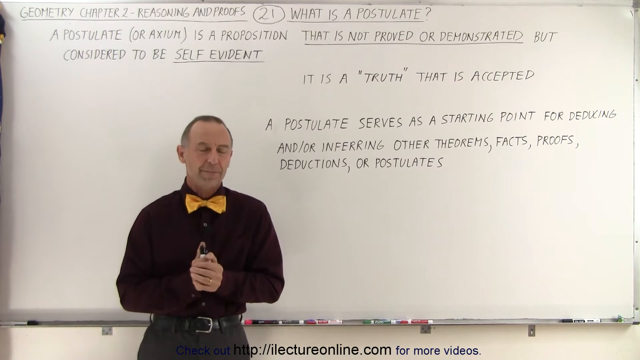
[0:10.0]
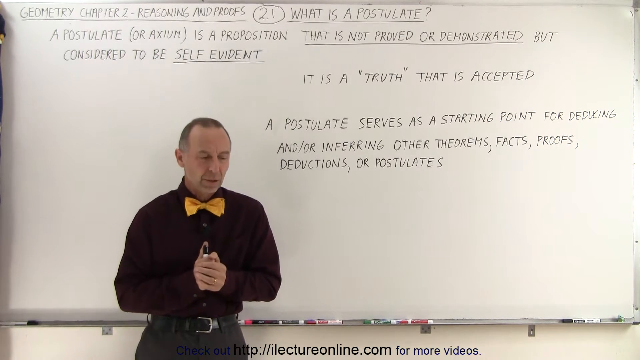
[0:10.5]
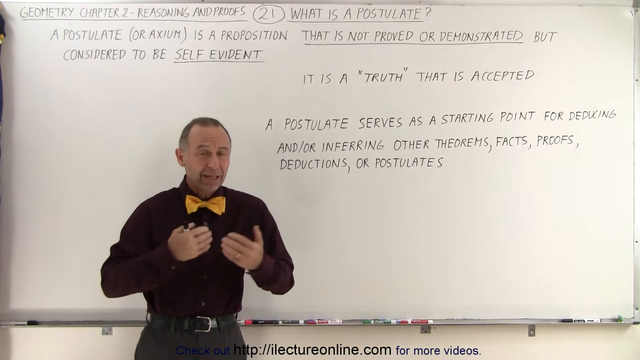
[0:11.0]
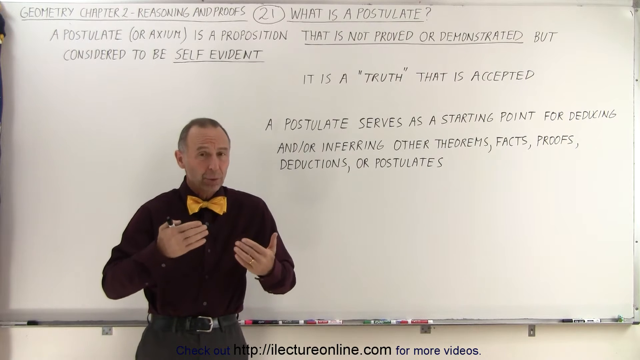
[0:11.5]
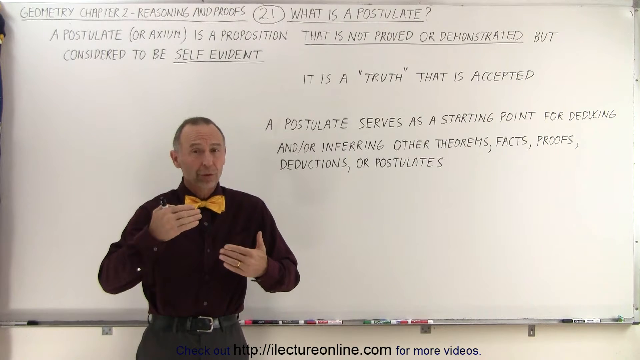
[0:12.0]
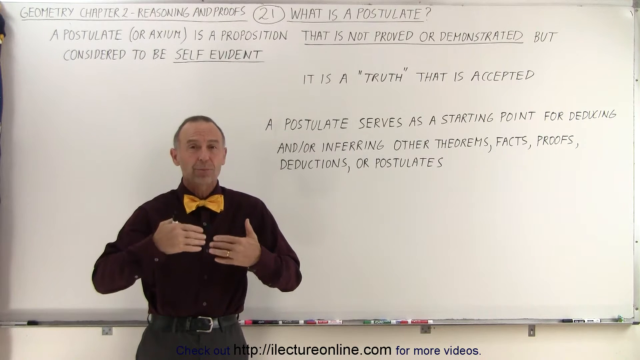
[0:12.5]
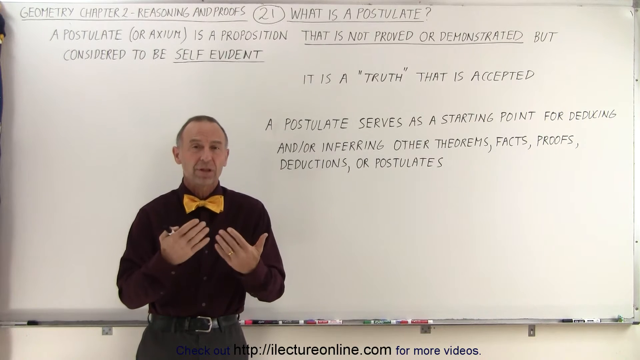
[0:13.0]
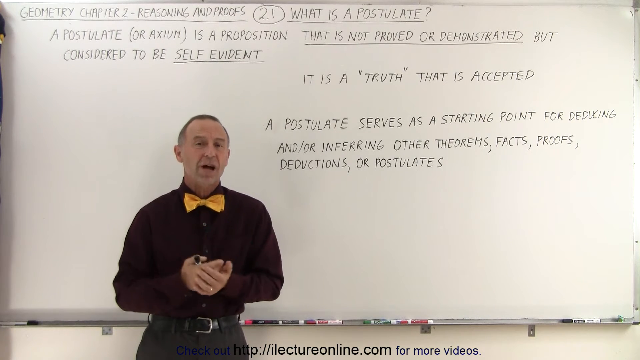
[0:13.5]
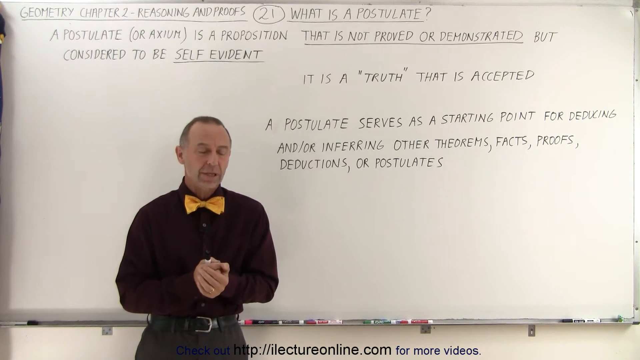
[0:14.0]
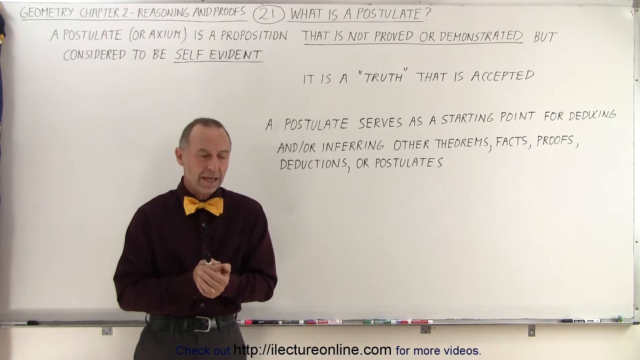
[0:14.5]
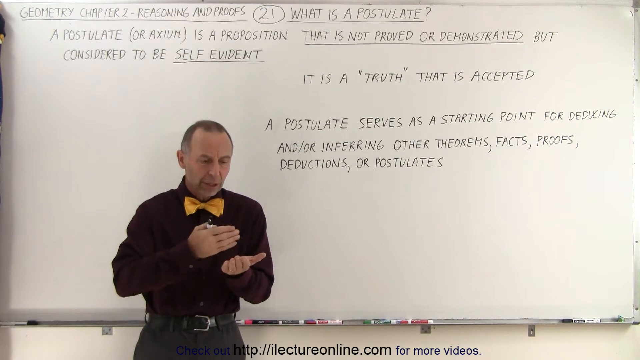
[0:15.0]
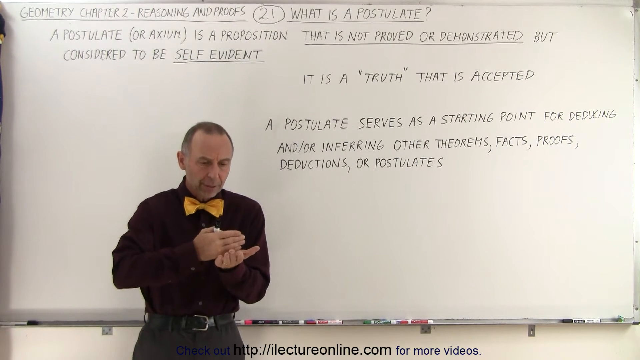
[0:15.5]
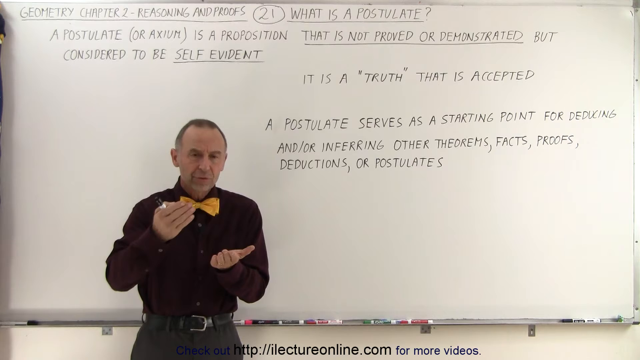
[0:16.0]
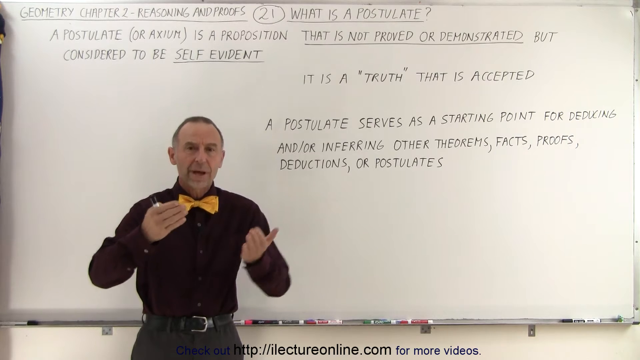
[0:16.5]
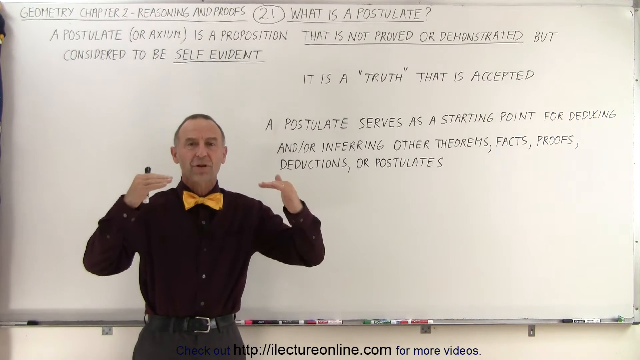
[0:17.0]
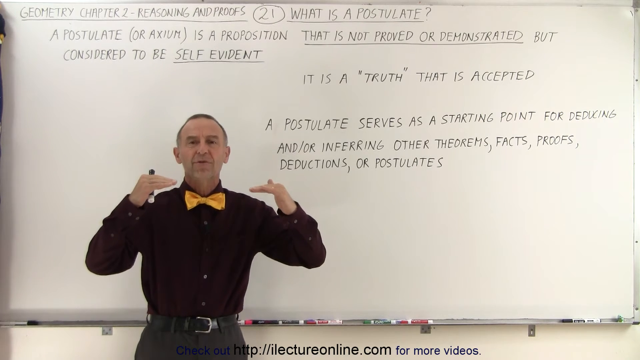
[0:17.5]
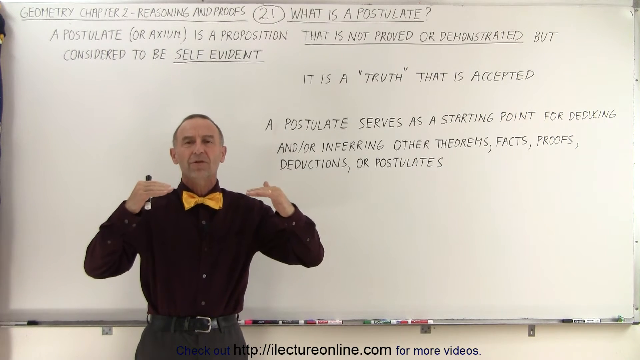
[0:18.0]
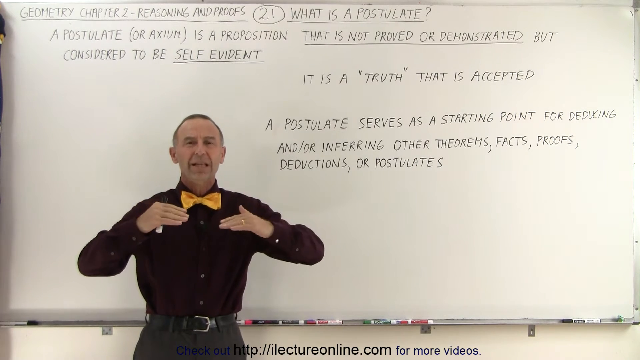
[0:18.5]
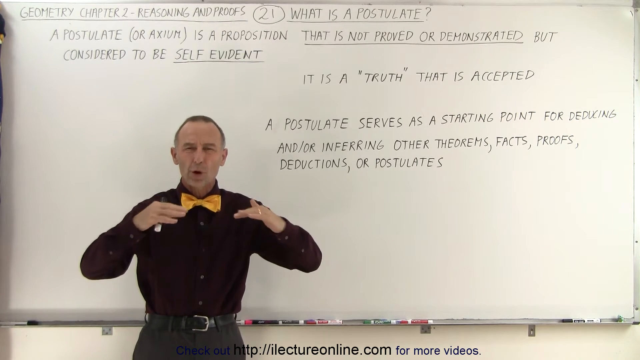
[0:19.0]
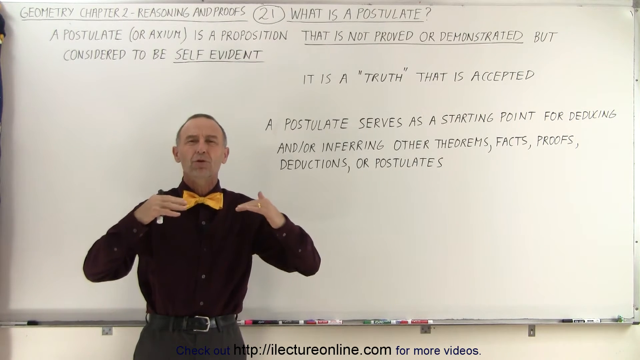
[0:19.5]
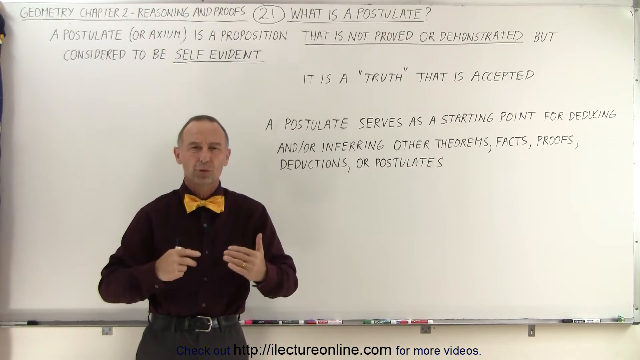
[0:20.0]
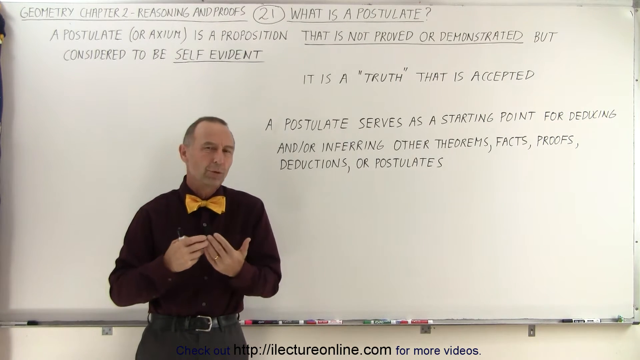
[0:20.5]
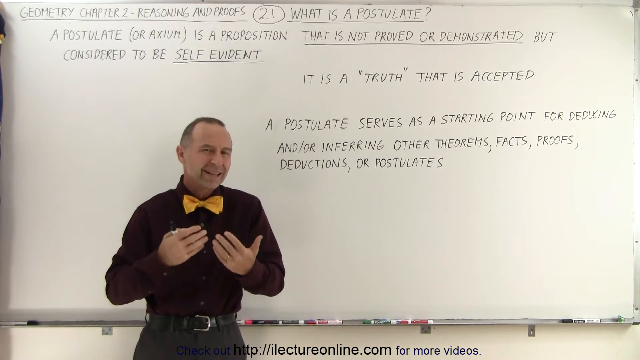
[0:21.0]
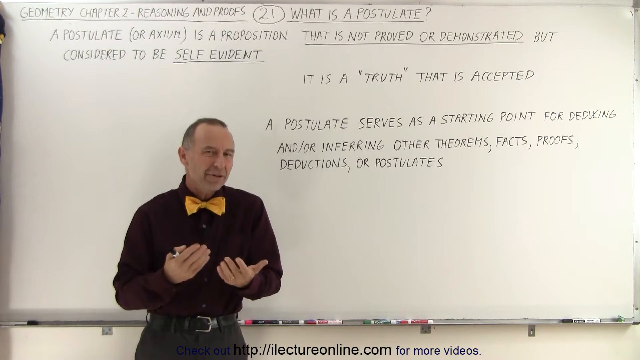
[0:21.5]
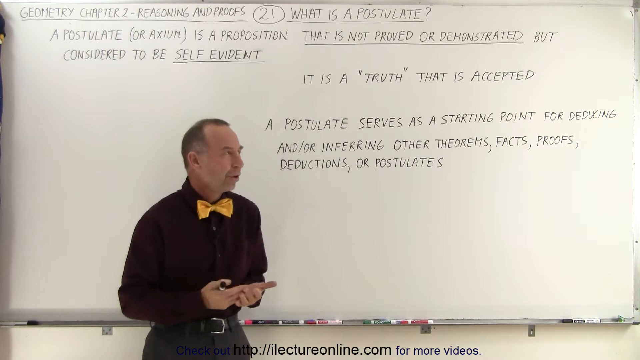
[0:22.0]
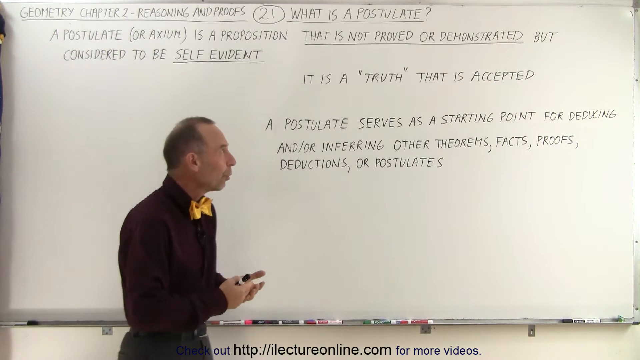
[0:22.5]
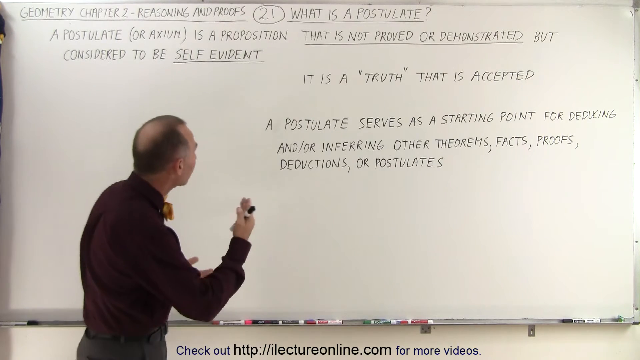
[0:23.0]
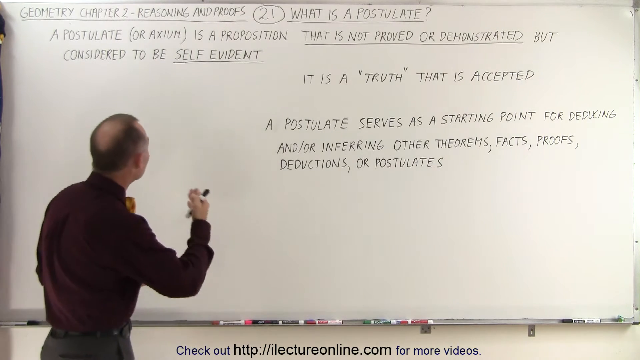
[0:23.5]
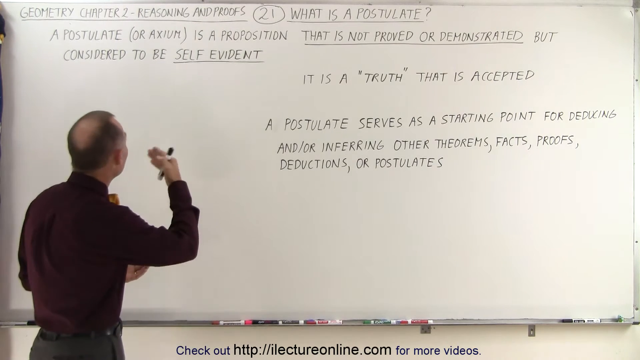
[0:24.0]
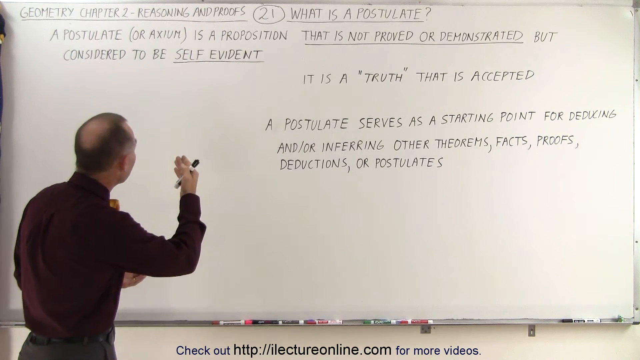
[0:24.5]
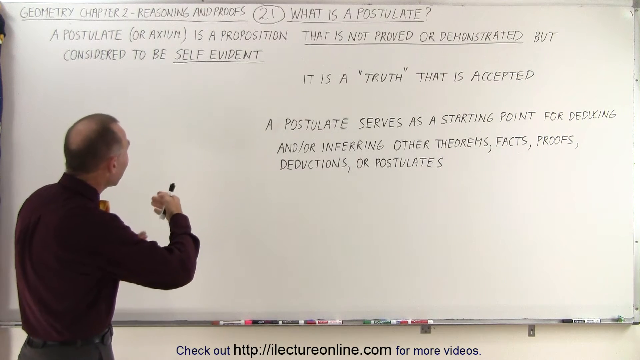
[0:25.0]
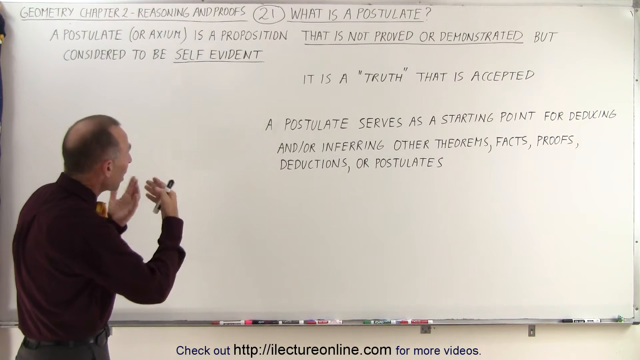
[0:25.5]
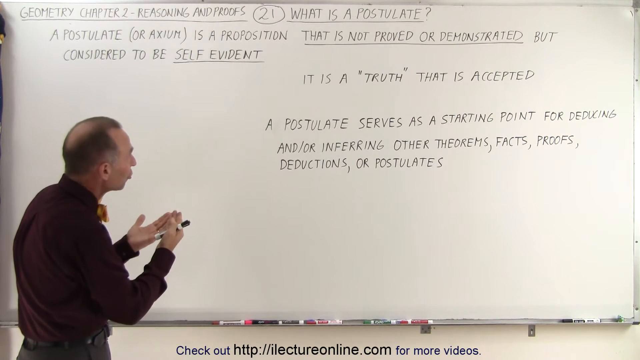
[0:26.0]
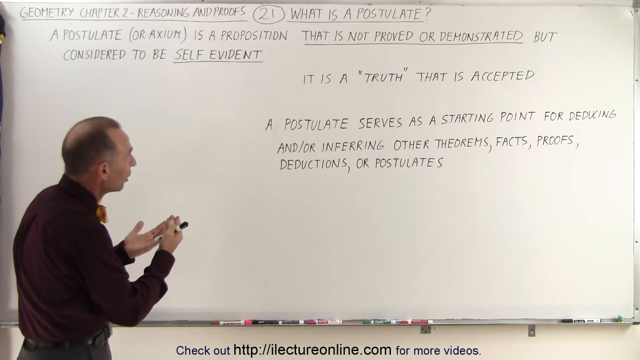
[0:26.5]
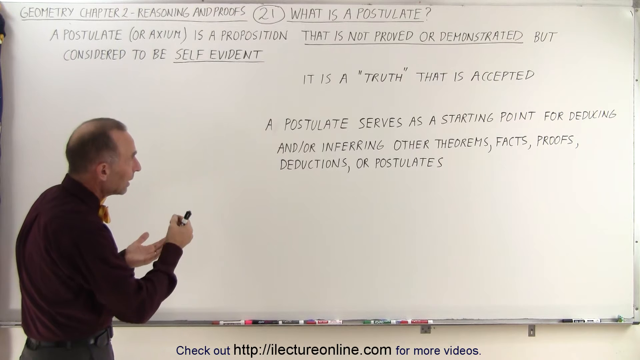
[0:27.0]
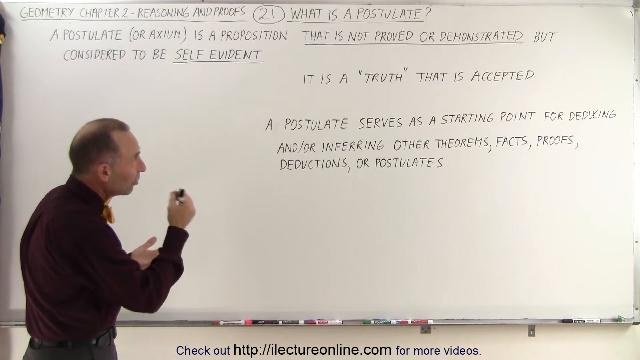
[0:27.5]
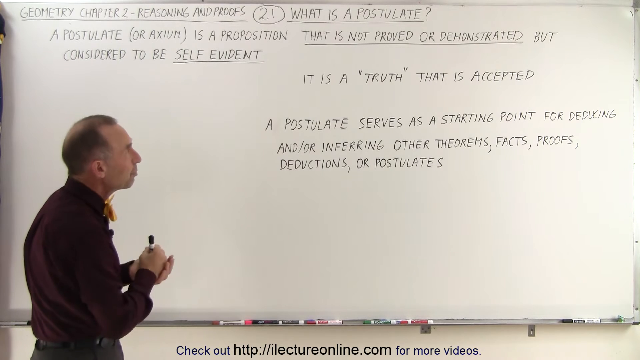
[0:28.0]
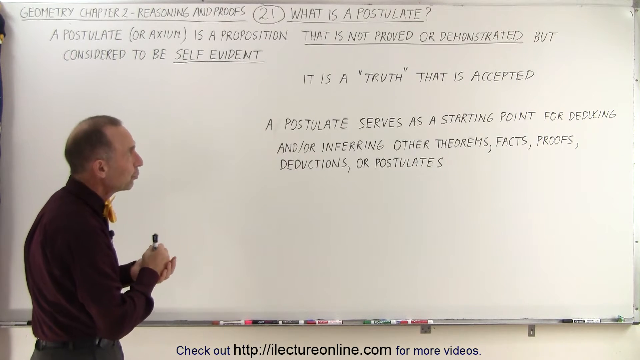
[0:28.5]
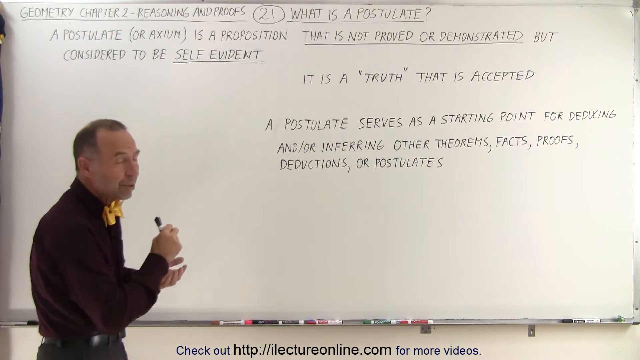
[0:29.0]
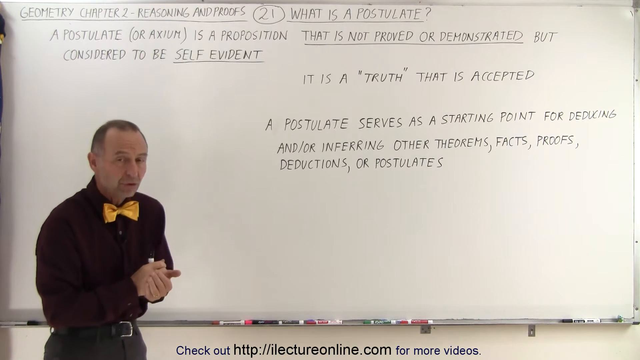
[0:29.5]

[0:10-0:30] The same man continues his geometry lecture on postulates, wearing a black shirt, black pants and the orange bow tie. He stands in front of the whiteboard, going over what is already written on it: that postulates are a proposition, not proved or demonstrated, but considered to be self-evident. The board also says "it is a truth that is accepted", and the writing finishes with "a postulate serves as a starting point for deducing and or inferring other theorems, facts, proofs, deductions, or postulates."